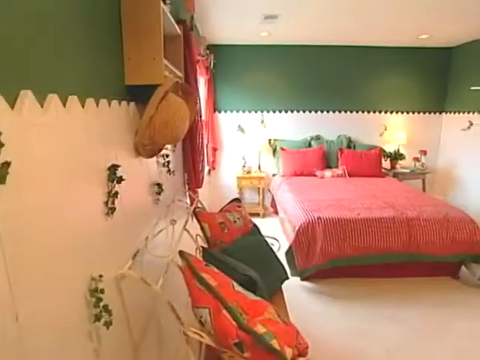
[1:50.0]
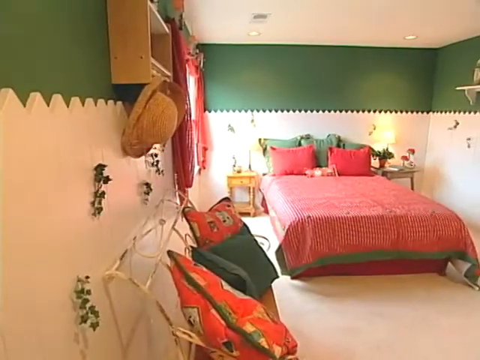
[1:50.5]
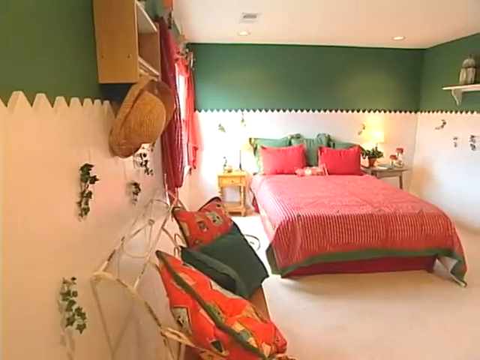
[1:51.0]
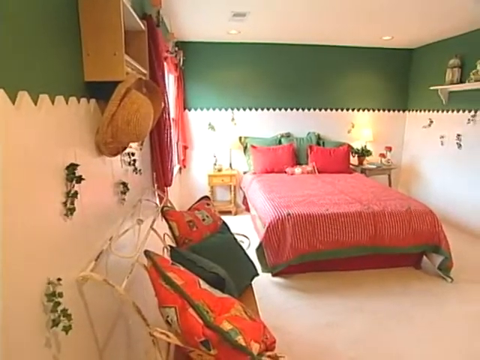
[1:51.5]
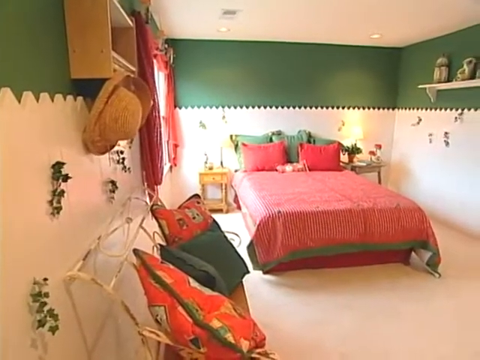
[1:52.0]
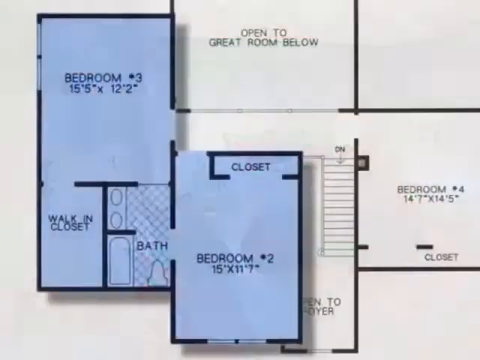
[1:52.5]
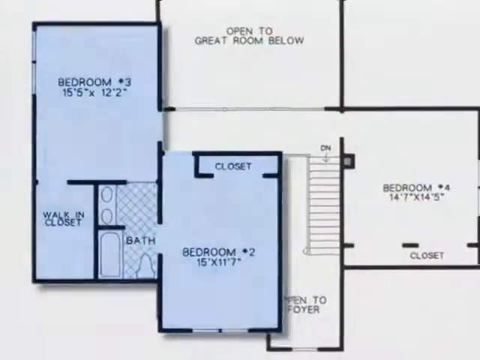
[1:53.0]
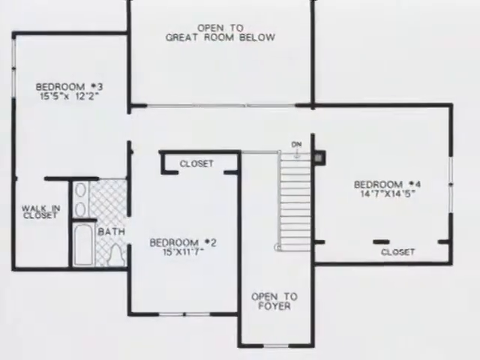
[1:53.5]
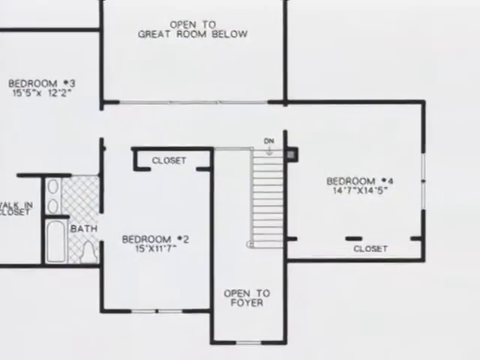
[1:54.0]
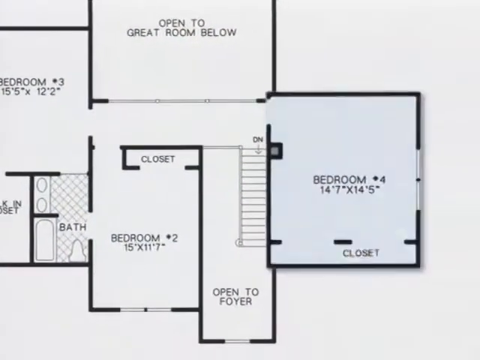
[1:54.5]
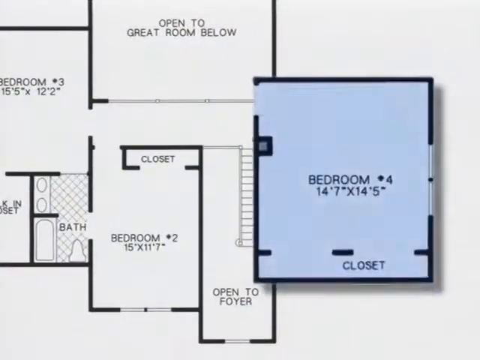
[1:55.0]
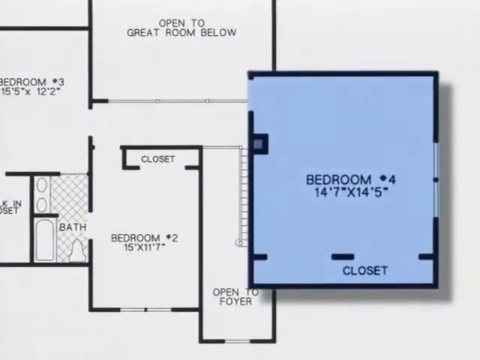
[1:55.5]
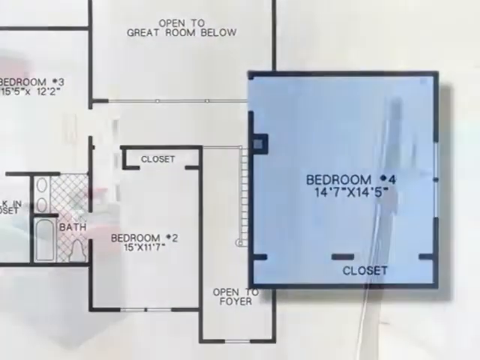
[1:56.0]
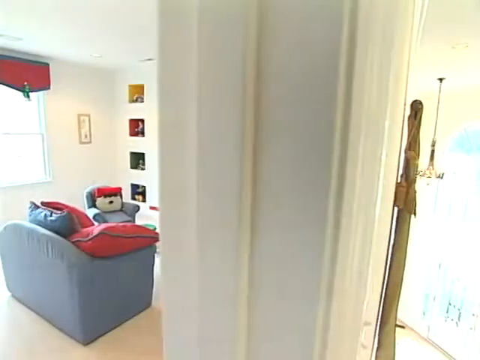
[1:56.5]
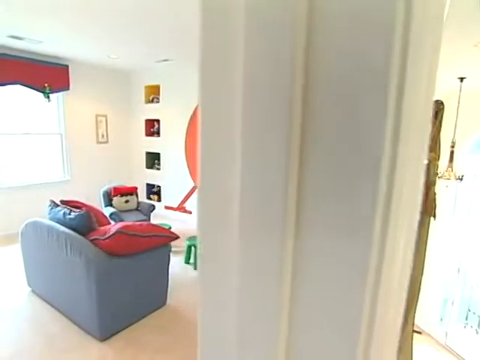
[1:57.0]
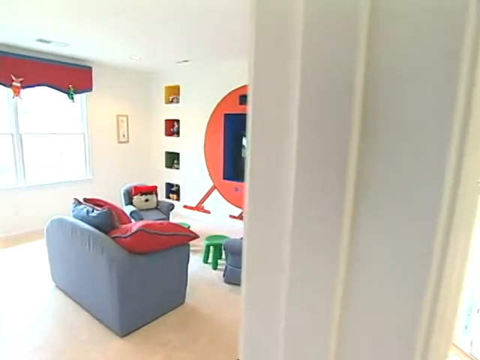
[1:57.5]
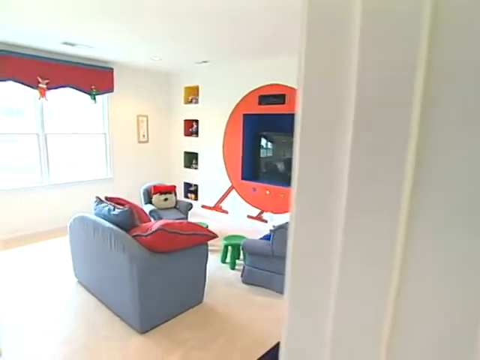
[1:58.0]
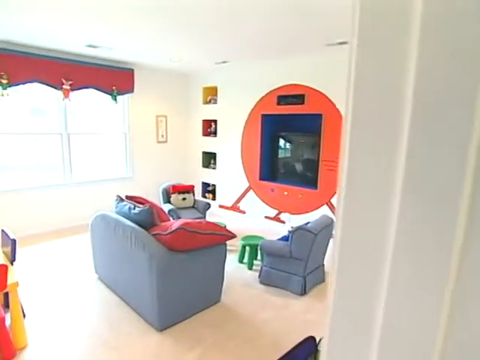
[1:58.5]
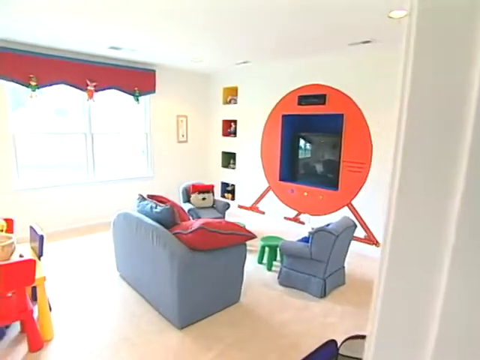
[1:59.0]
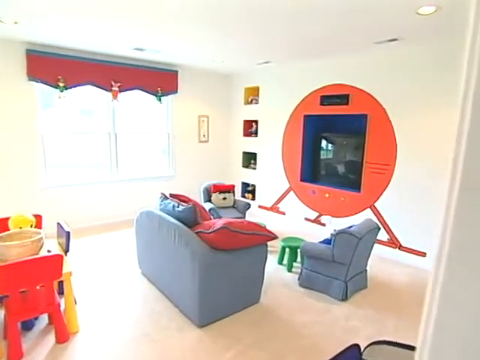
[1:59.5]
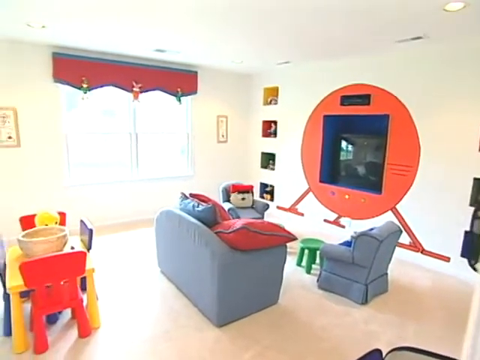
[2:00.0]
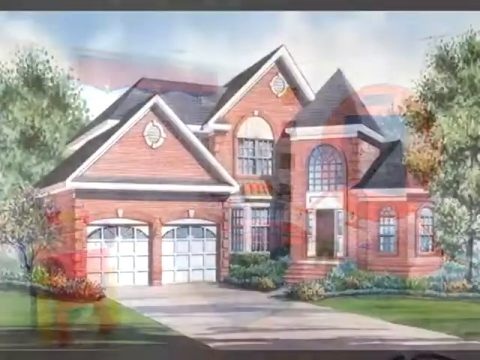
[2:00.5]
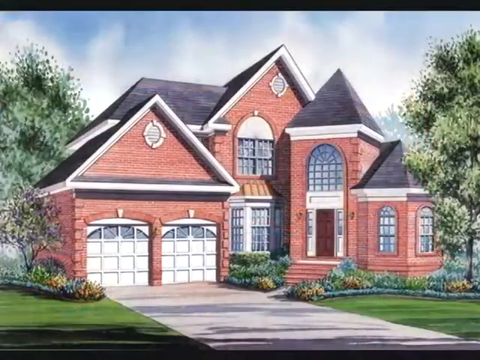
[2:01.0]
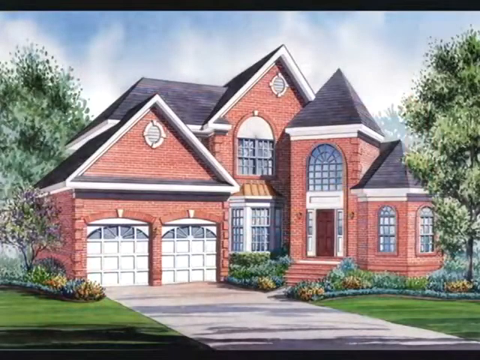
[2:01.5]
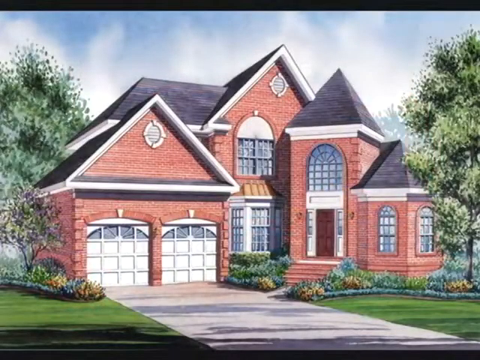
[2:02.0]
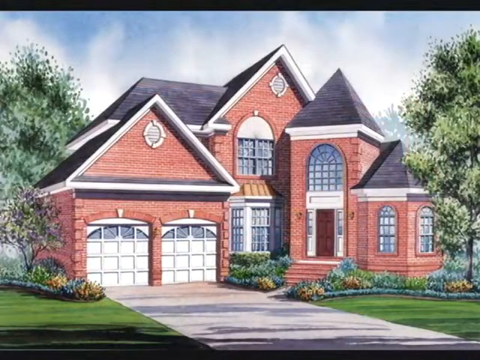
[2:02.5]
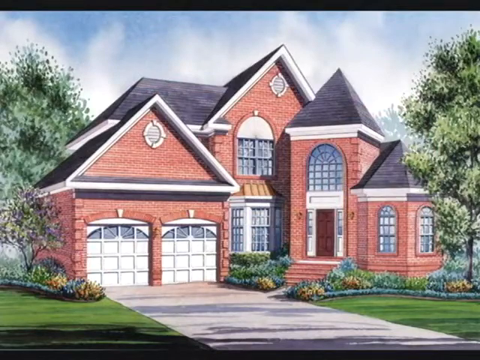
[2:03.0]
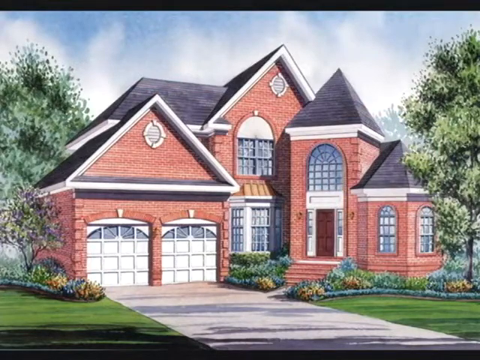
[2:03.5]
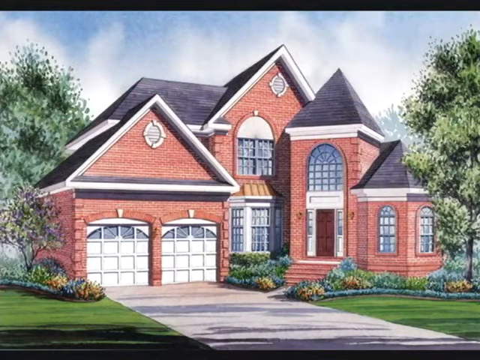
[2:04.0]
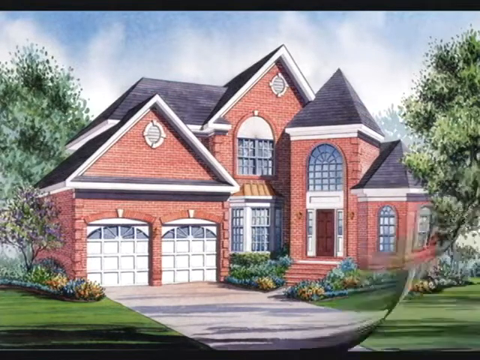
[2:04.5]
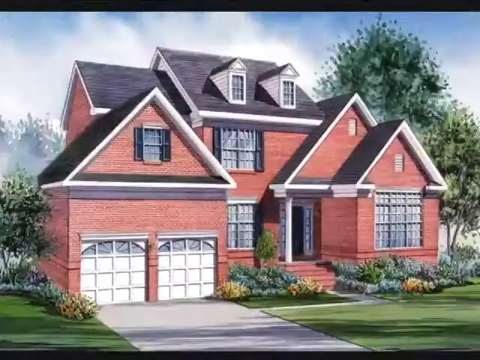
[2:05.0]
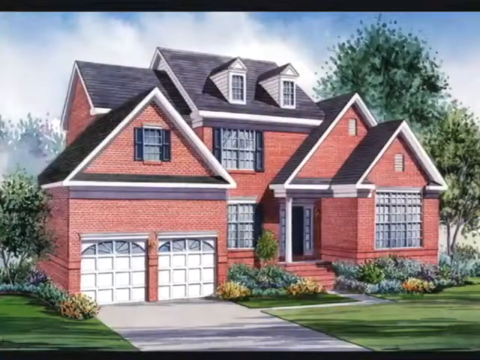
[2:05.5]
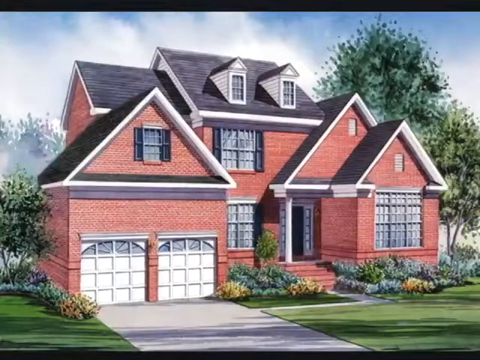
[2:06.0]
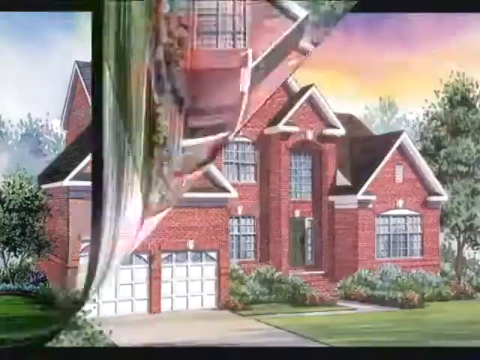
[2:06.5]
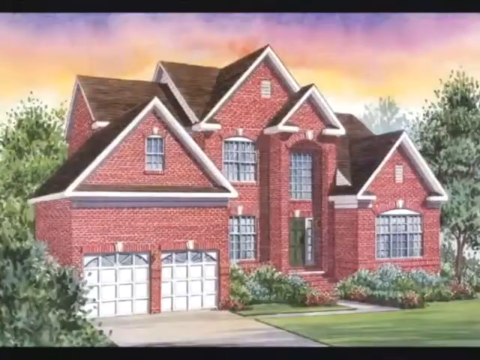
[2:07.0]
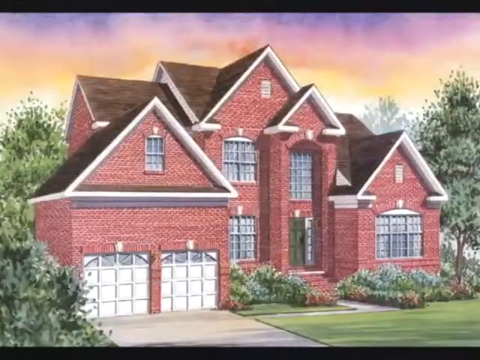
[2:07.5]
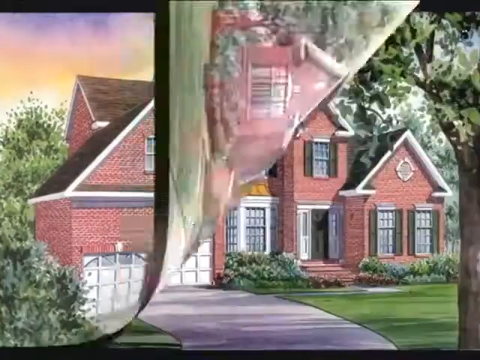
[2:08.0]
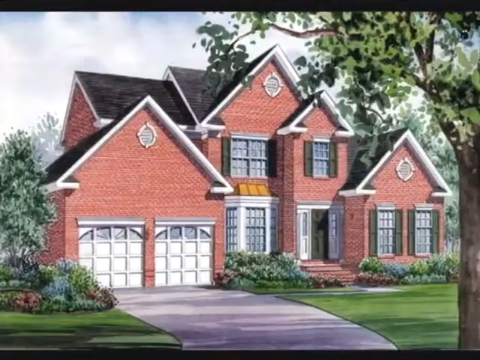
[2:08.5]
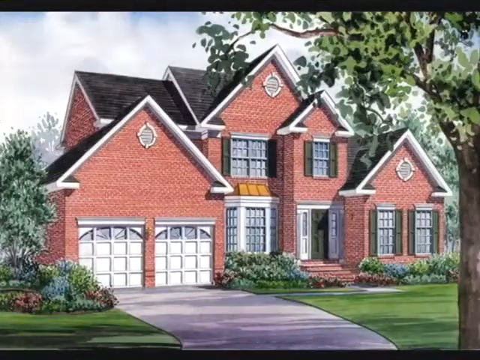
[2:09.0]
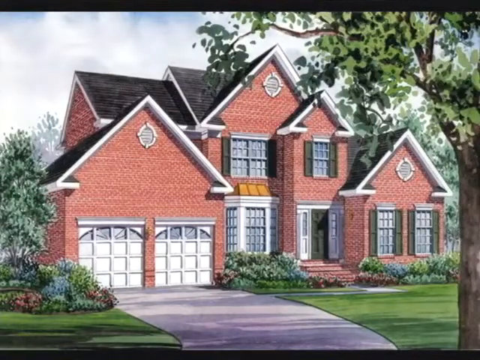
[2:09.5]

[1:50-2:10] A bedroom looks almost like an elf theme, being all green and red. The bedding is green and red, and one wall has green wallpaper with what seems to be some kind of jagged white wood around it, with various leaves attached to that section. More red and green objects are along the wall, and there is a brown hat and a brown shelf. The curtains appear to be red as well. The camera moves a little to the right to show another shelf, before the video returns to the floor plan, where that room returns to normal and a new bedroom enlarges and turns blue. The new bedroom appears to be for a child. It has a TV in the wall with a strange spaceship design, small child's tables and chairs, small child's sofas, and a colourful curtain on the window. The shot then switches to an outside drawing of the house, followed by a page animation showing more drawings of the house, apparently showing how it has changed over the years.